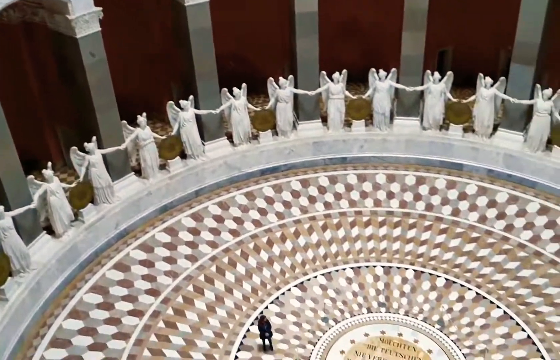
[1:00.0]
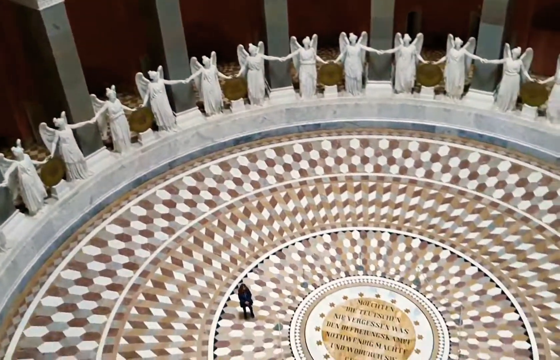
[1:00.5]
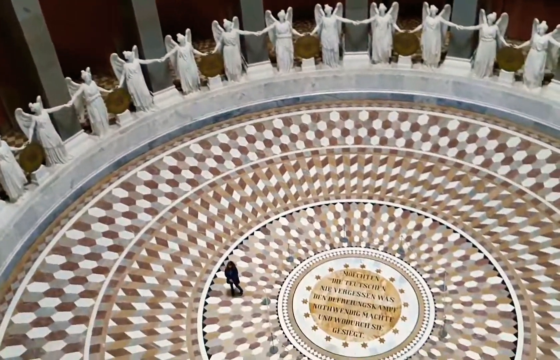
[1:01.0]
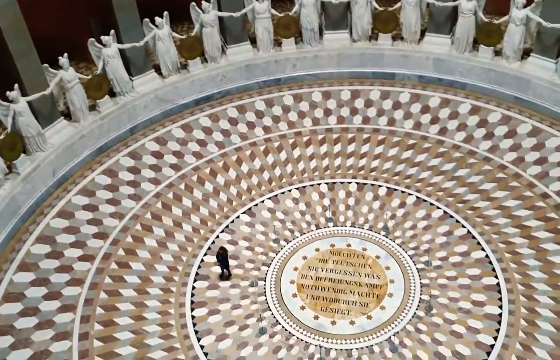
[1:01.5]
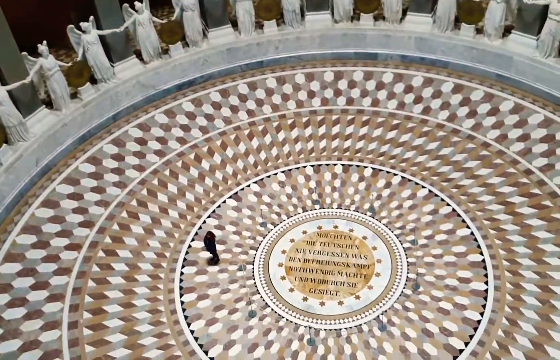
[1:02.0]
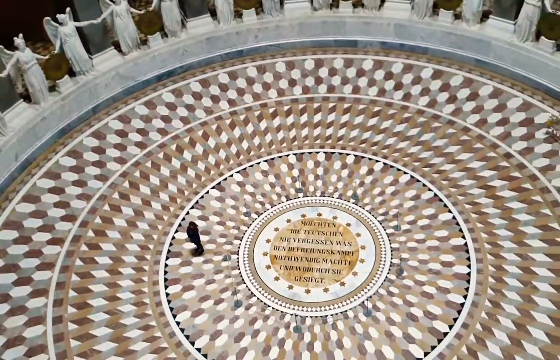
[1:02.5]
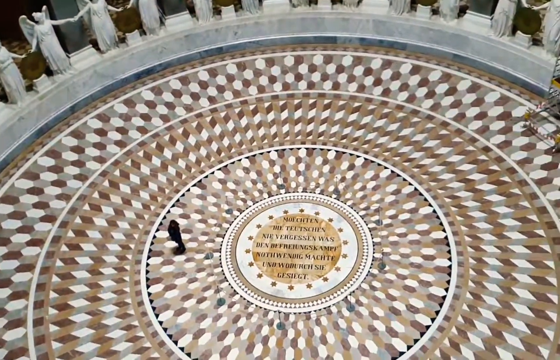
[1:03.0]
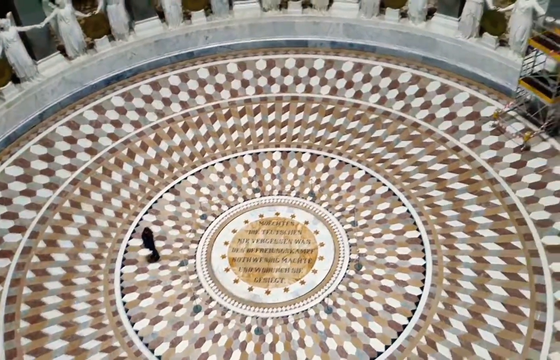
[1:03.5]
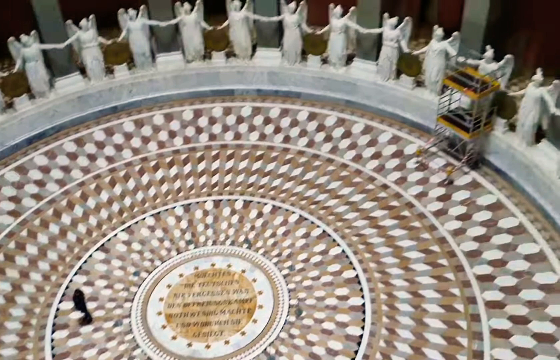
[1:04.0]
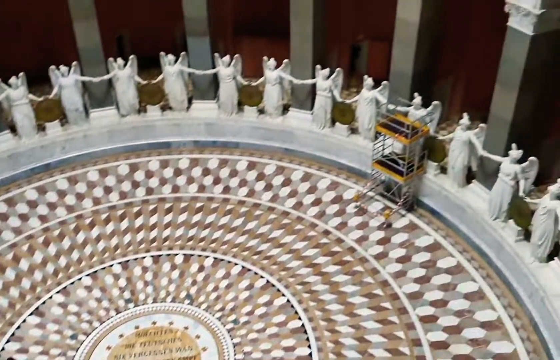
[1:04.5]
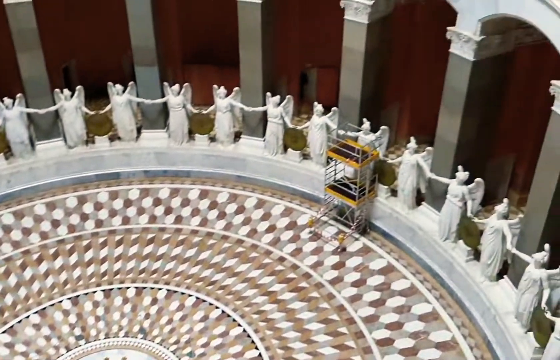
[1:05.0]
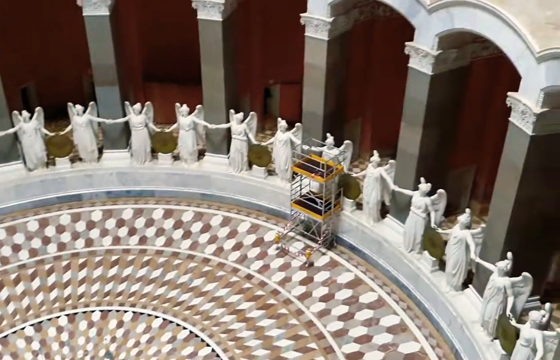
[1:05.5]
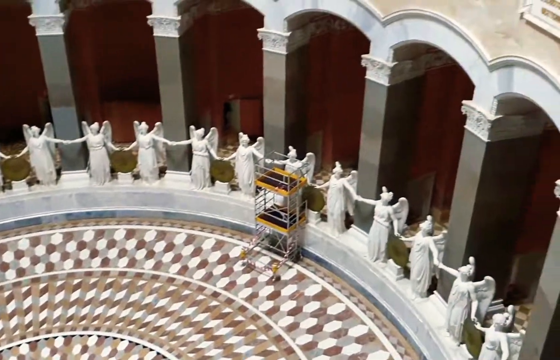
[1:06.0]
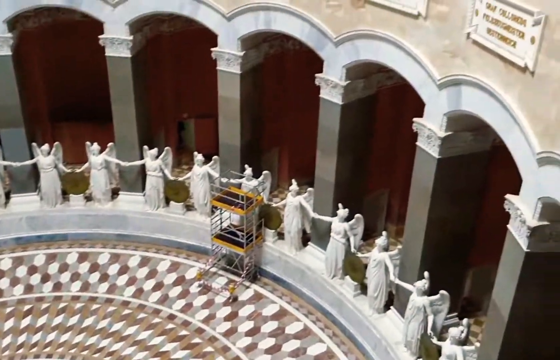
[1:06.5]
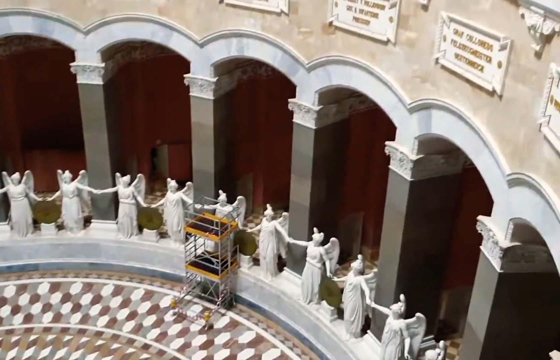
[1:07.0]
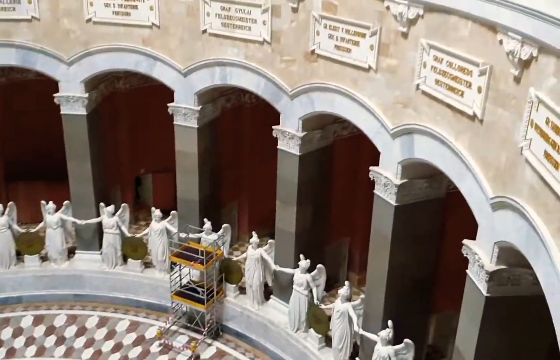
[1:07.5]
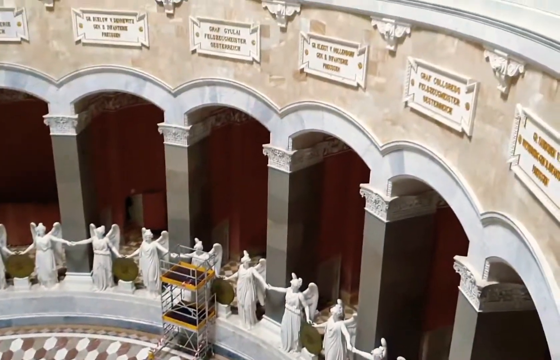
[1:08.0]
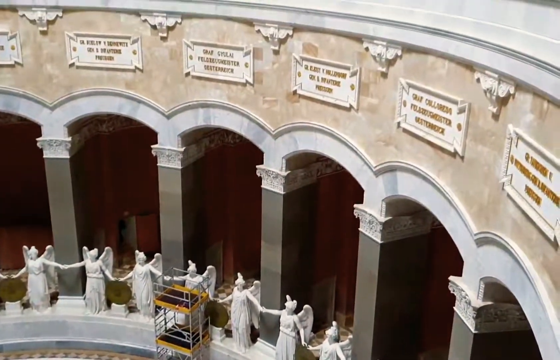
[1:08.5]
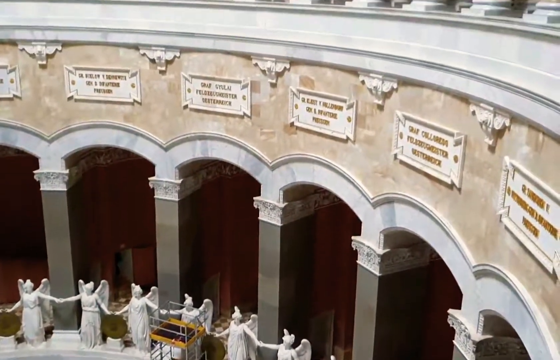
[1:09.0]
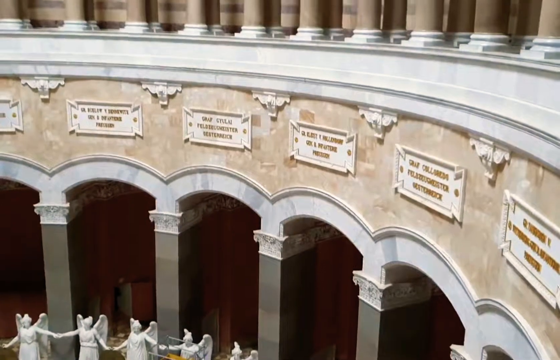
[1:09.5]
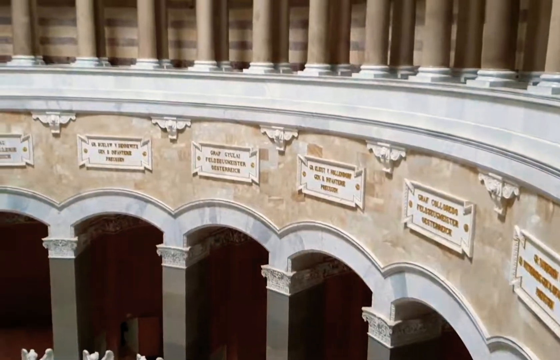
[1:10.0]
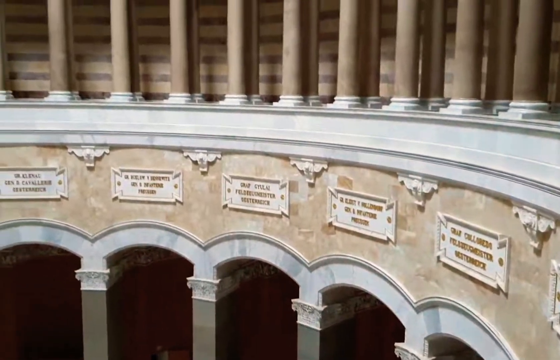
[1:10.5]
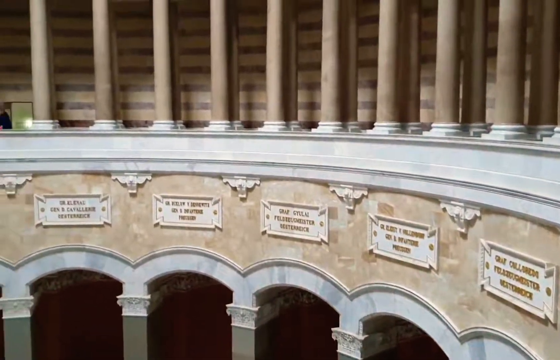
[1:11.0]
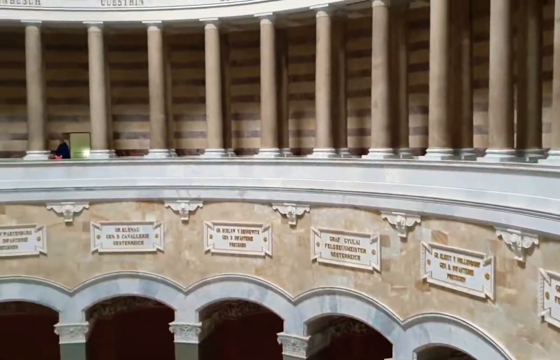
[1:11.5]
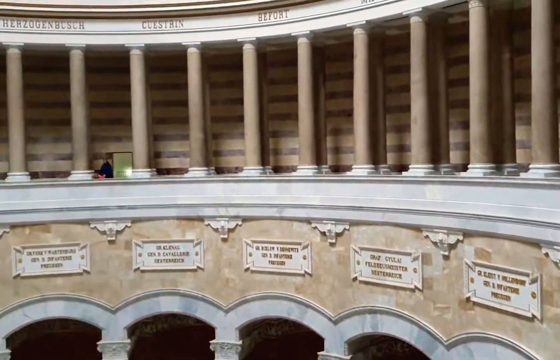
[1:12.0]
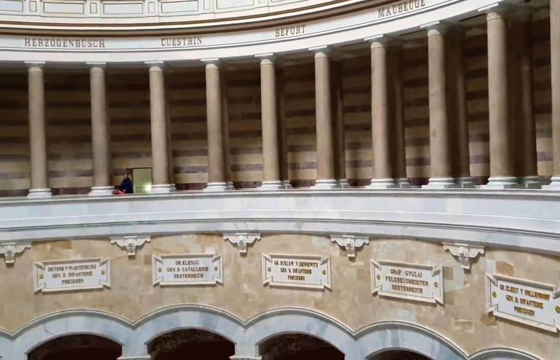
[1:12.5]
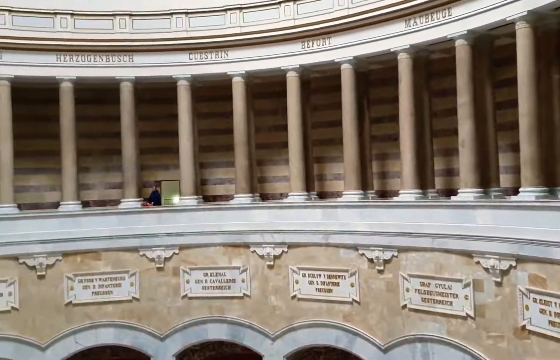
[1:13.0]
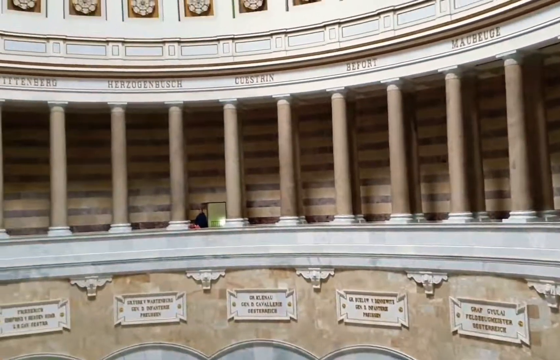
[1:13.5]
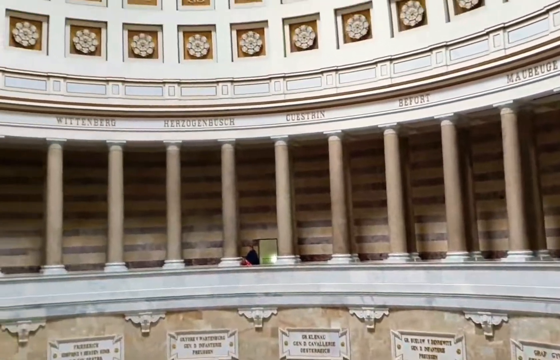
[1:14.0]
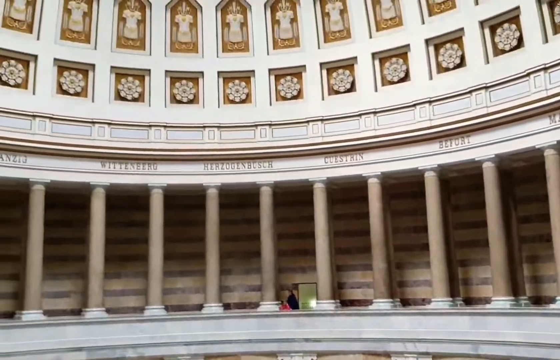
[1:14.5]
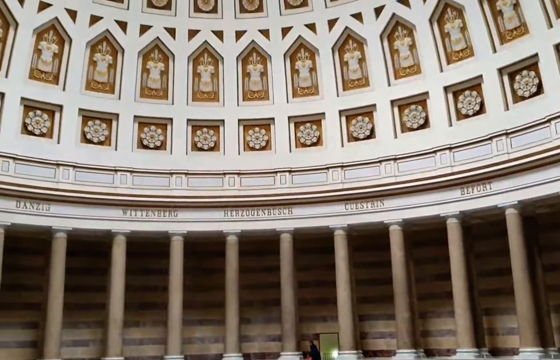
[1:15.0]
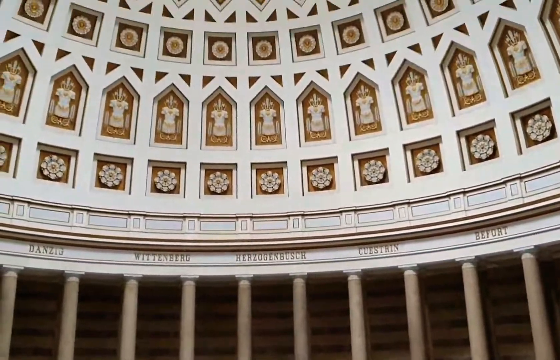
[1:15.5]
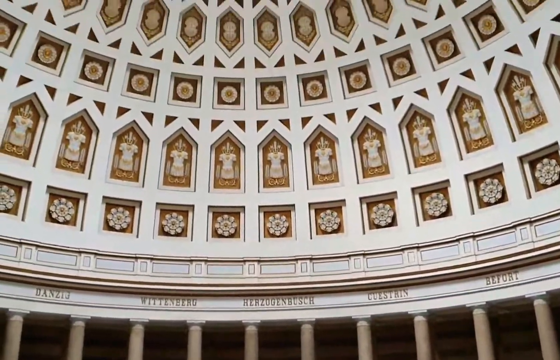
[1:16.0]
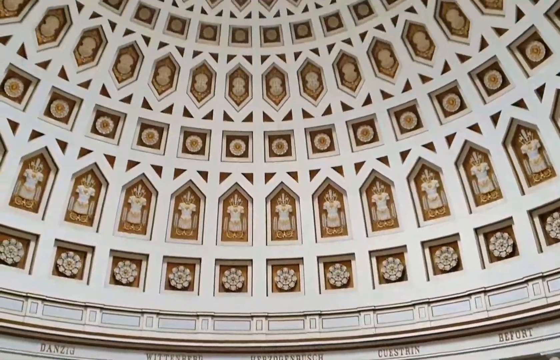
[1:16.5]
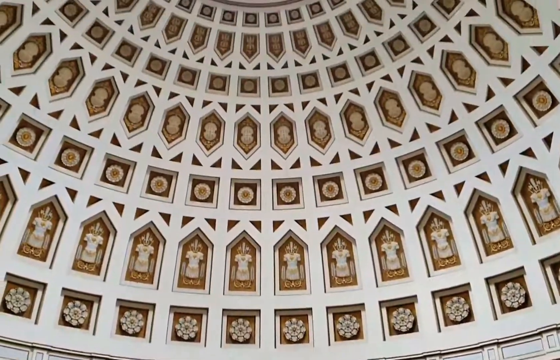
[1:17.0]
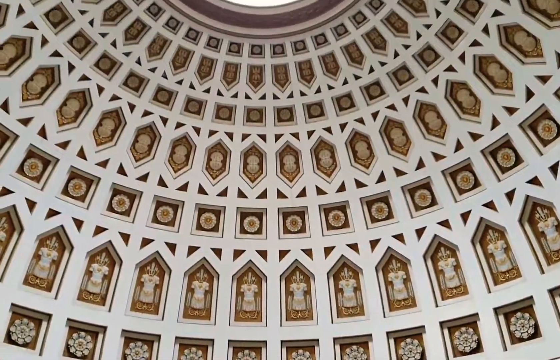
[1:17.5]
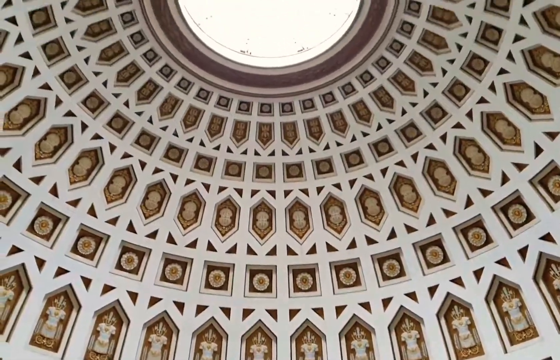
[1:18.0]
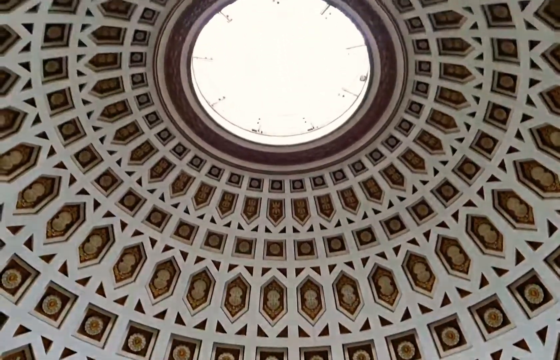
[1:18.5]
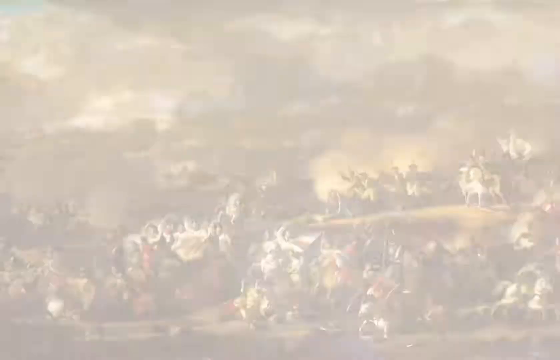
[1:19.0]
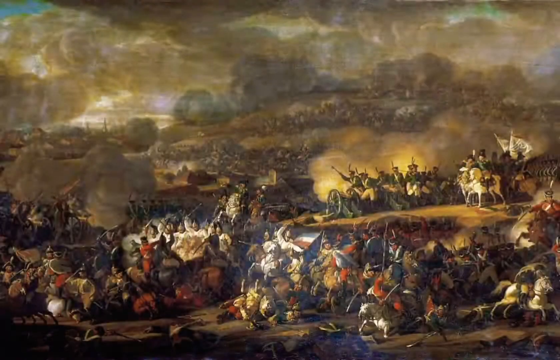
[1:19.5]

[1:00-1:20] The focus is initially on the floor, which has a circle in the middle with what is assumed to be Roman writing on it, and on the design of the floor tiles. The camera then pans up to show the inside of the dome again. The shot ends focused on a piece of artwork that looks like a painting of a Roman battle scene, kind of Renaissance-era. It has some red and blue but mostly lots of browns and lots of smoke. There are cannons, people pointing, and people on white horses up on a kind of hill, with lots of people down below in a massive battle, holding flags and weapons, with guns firing.